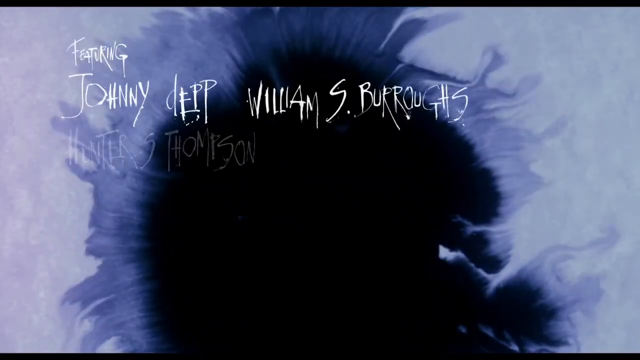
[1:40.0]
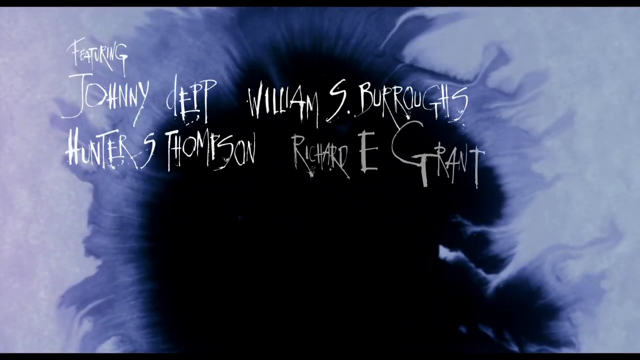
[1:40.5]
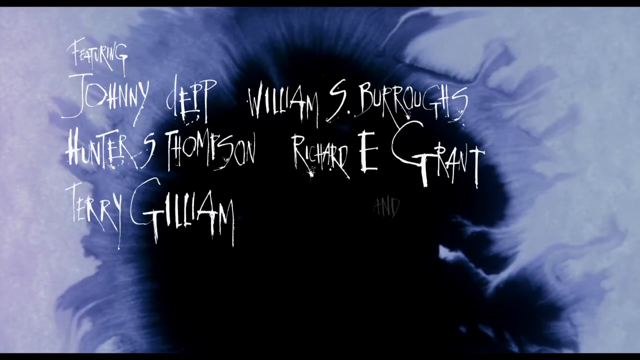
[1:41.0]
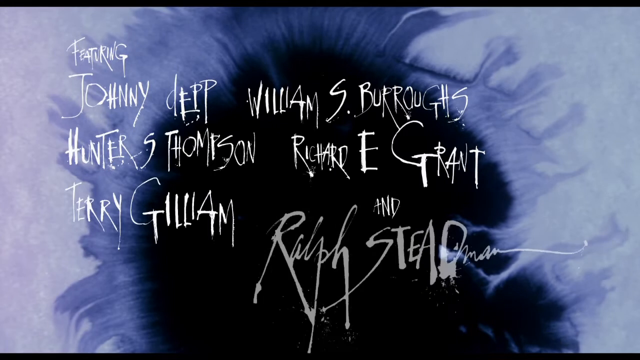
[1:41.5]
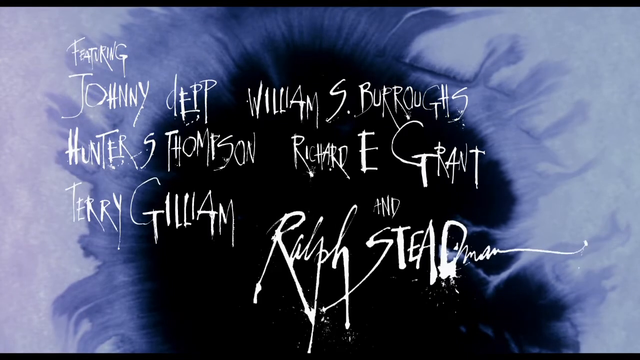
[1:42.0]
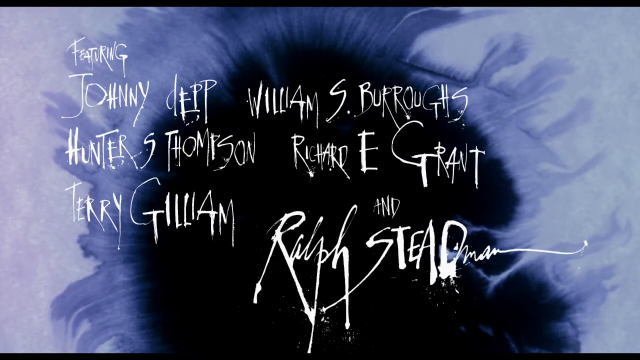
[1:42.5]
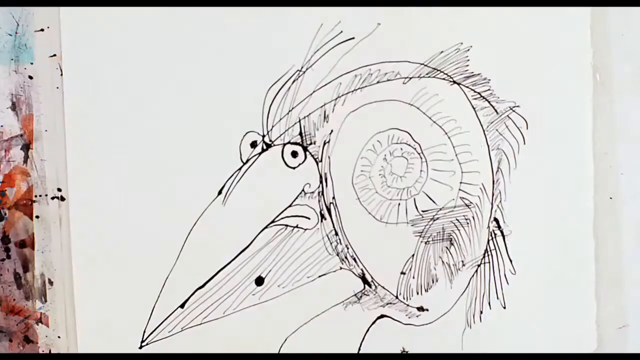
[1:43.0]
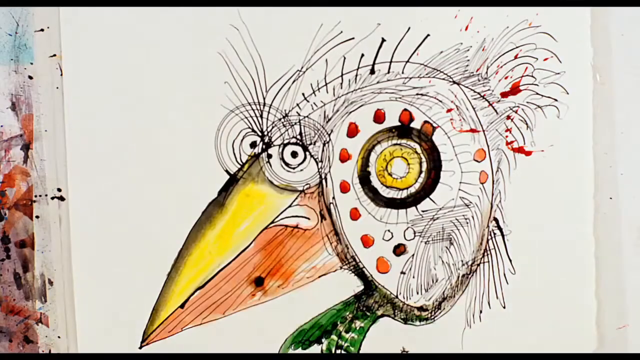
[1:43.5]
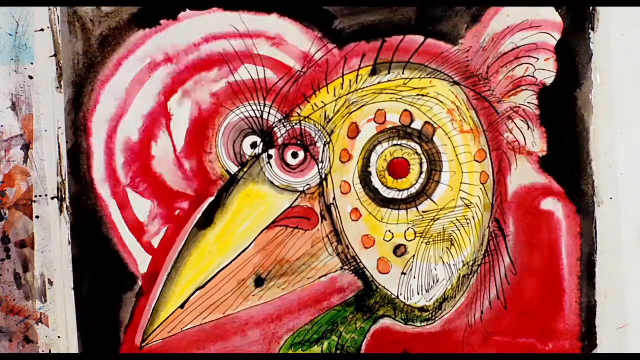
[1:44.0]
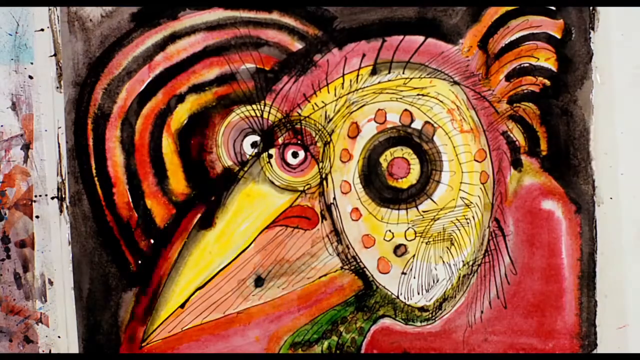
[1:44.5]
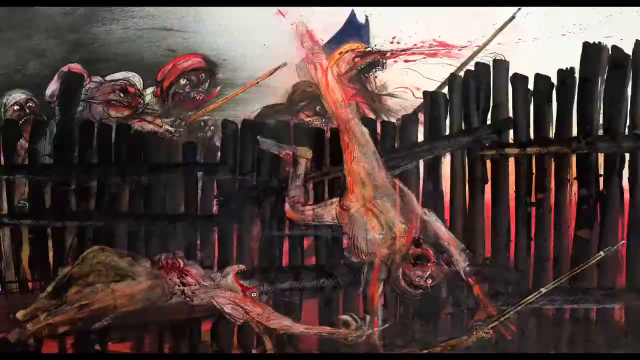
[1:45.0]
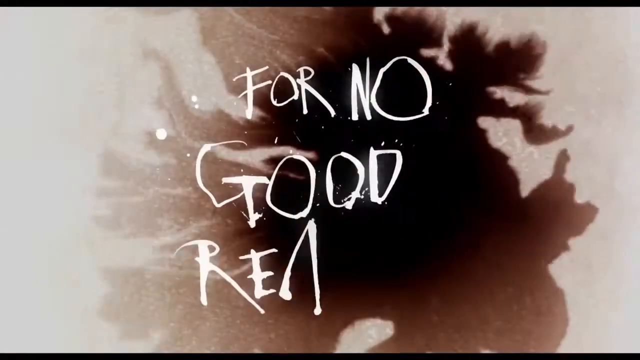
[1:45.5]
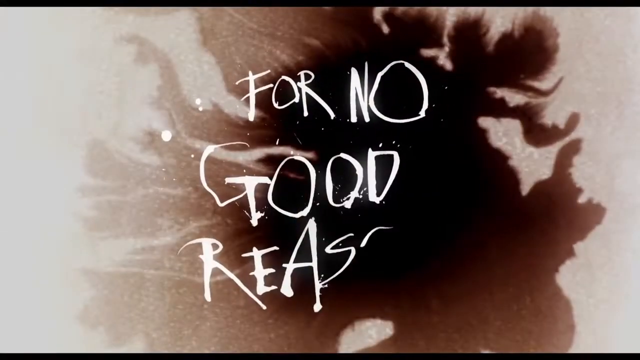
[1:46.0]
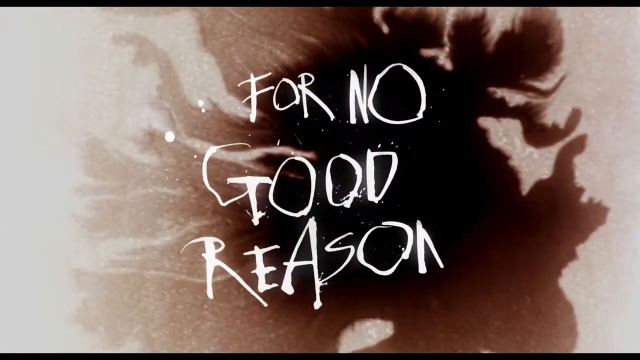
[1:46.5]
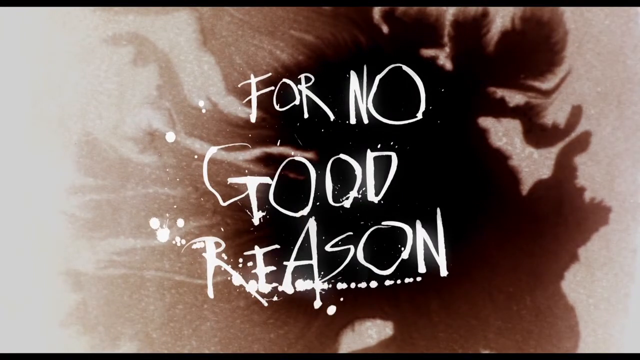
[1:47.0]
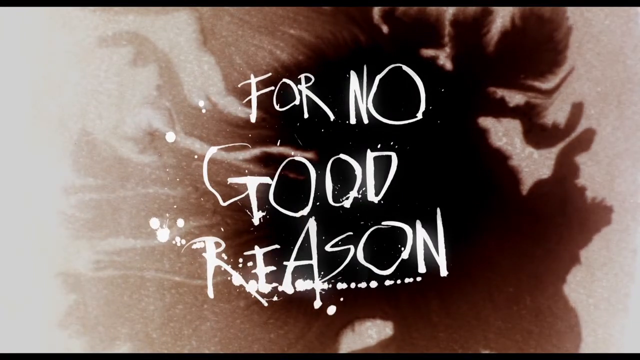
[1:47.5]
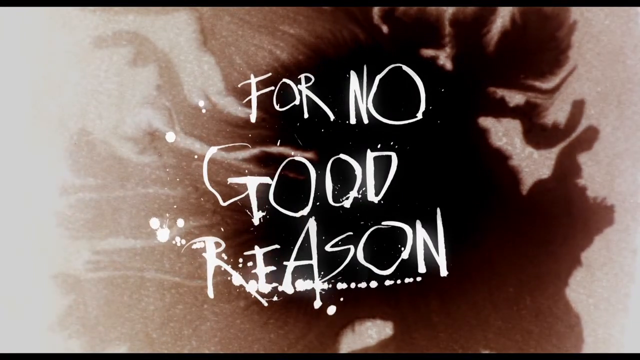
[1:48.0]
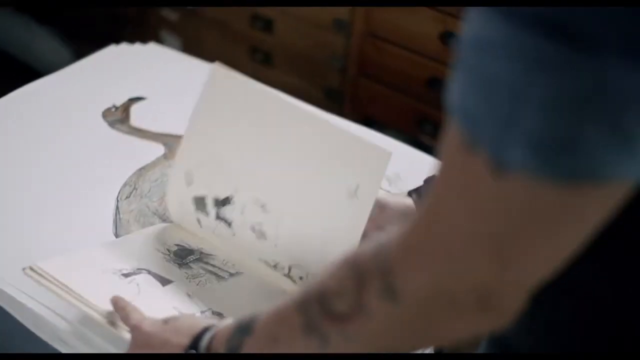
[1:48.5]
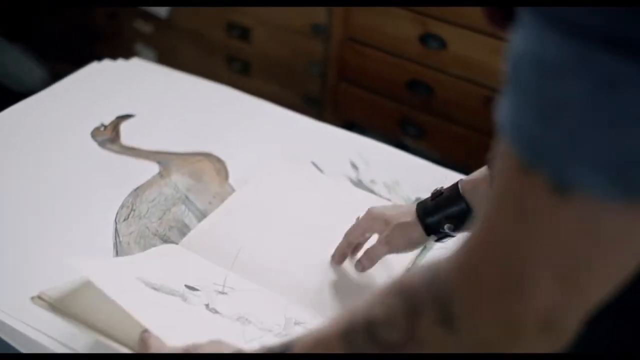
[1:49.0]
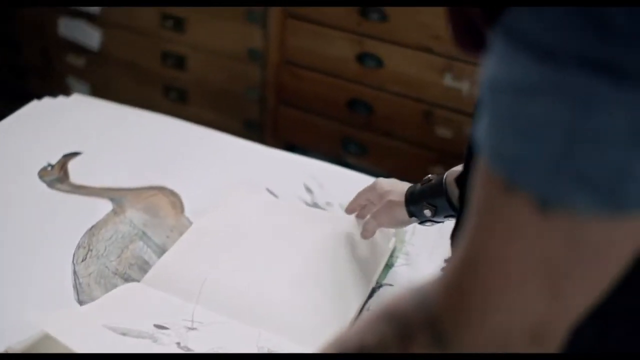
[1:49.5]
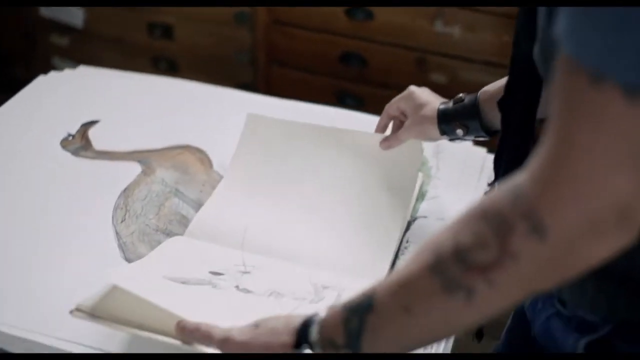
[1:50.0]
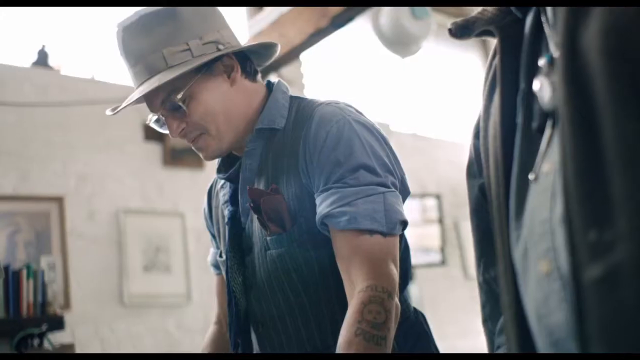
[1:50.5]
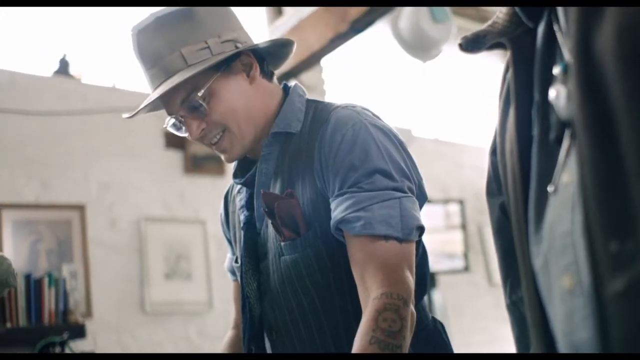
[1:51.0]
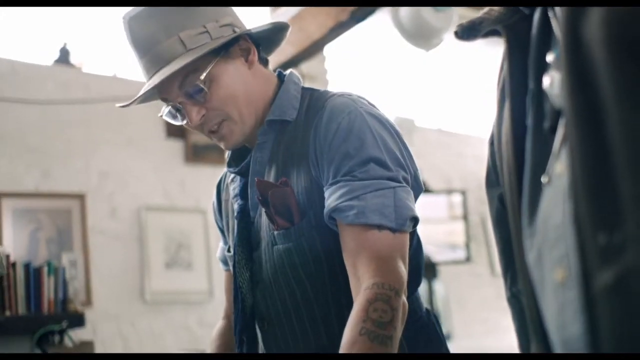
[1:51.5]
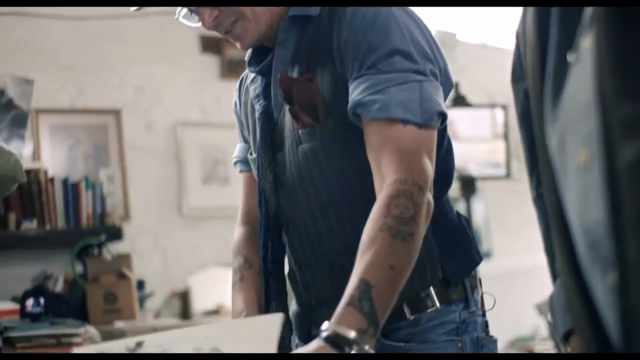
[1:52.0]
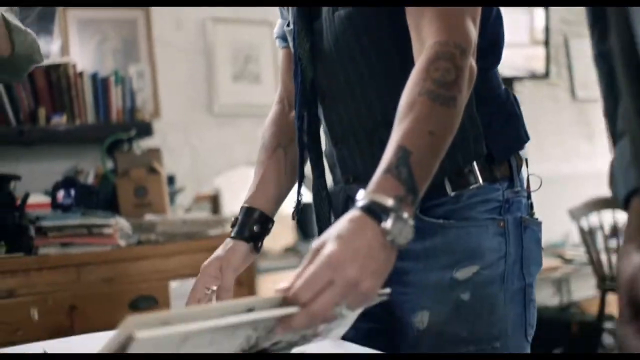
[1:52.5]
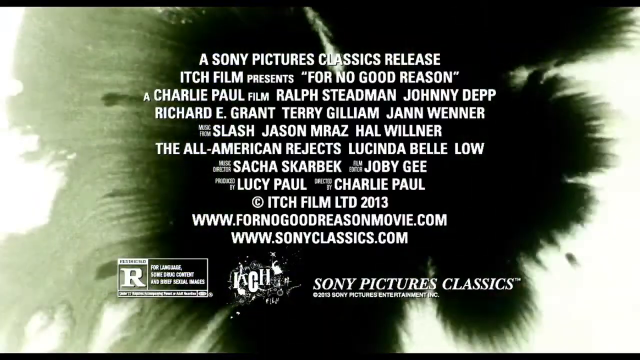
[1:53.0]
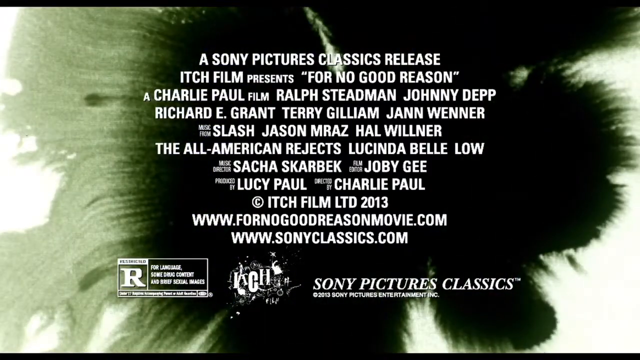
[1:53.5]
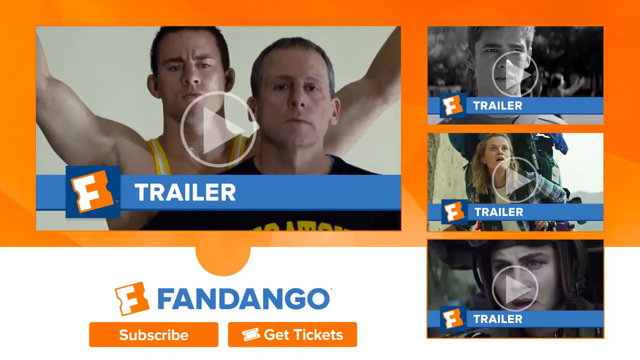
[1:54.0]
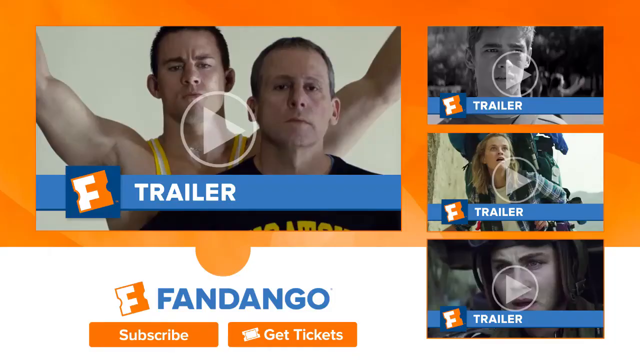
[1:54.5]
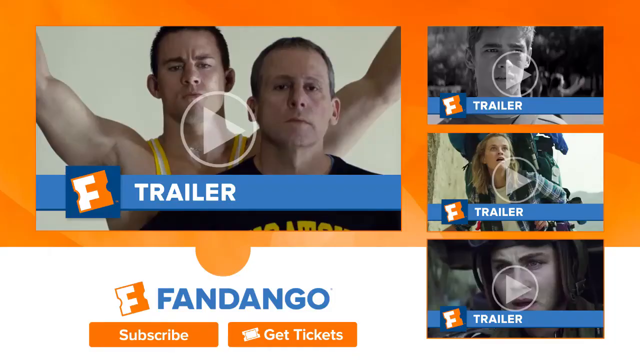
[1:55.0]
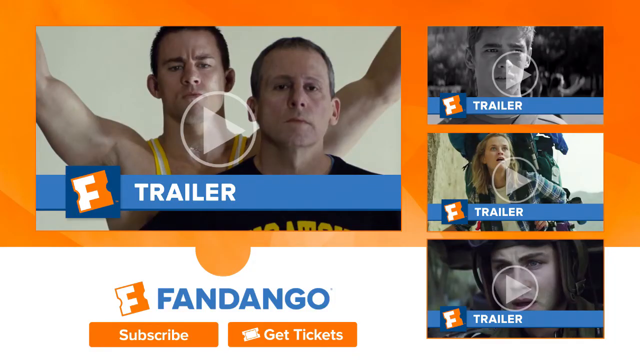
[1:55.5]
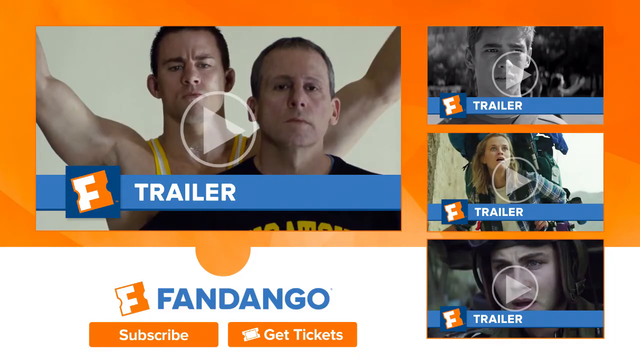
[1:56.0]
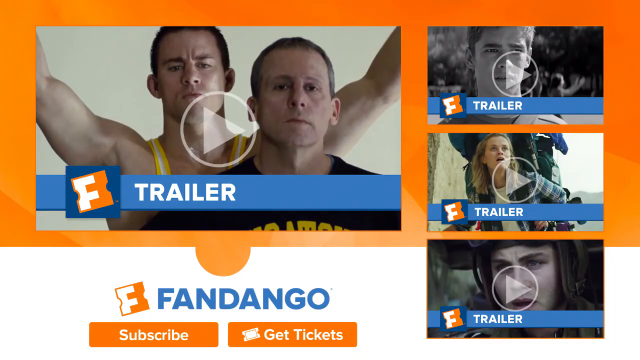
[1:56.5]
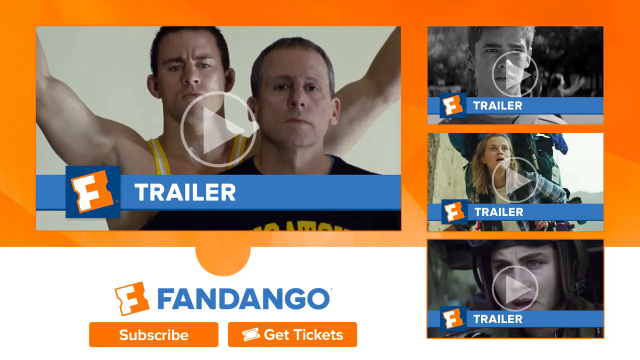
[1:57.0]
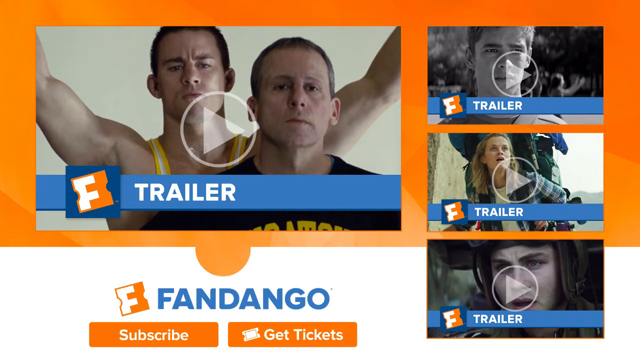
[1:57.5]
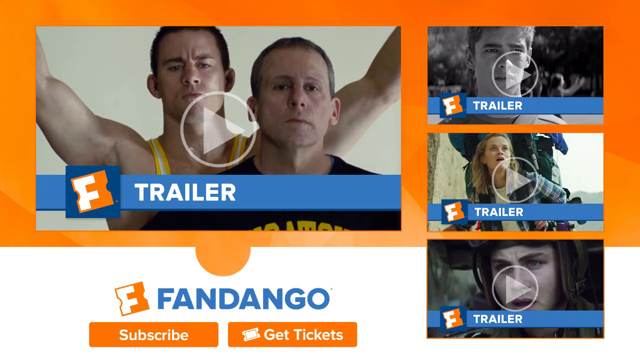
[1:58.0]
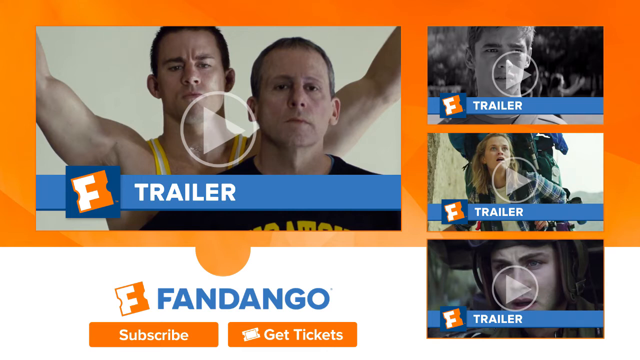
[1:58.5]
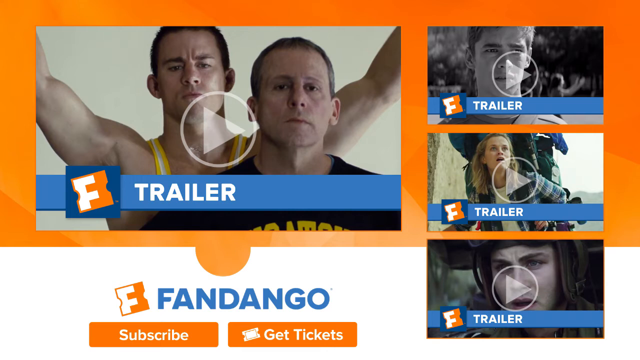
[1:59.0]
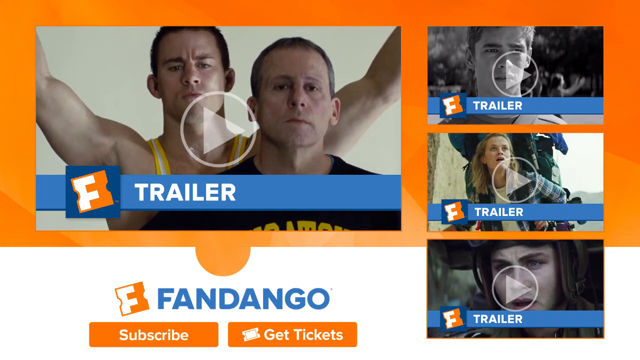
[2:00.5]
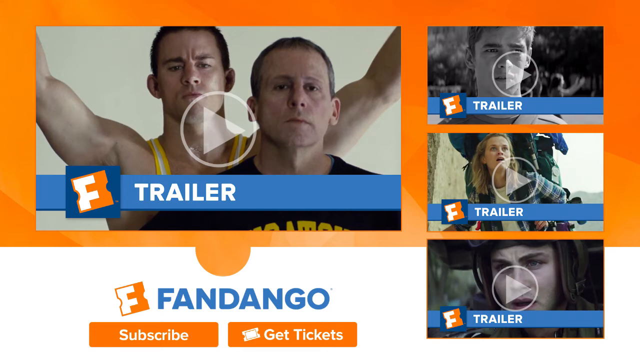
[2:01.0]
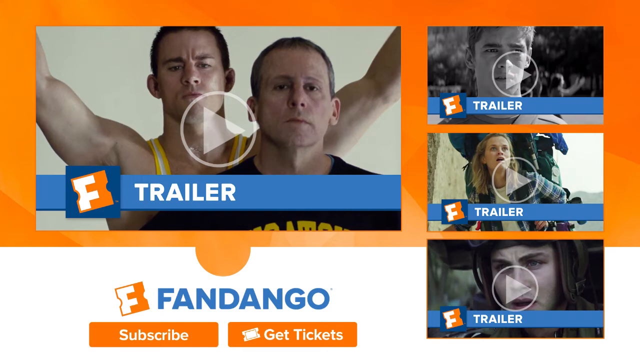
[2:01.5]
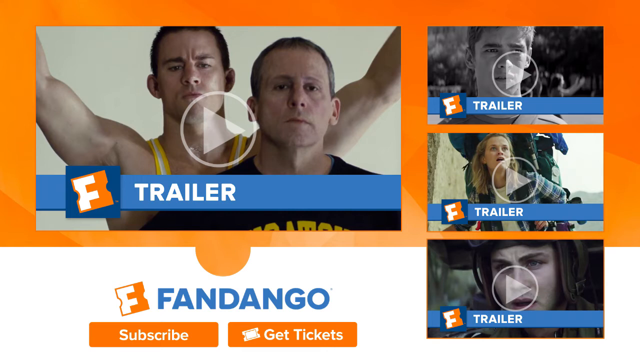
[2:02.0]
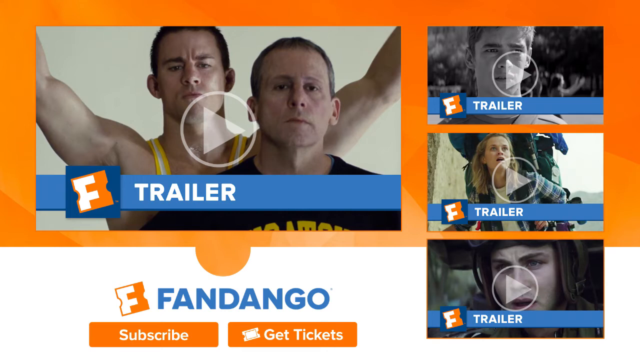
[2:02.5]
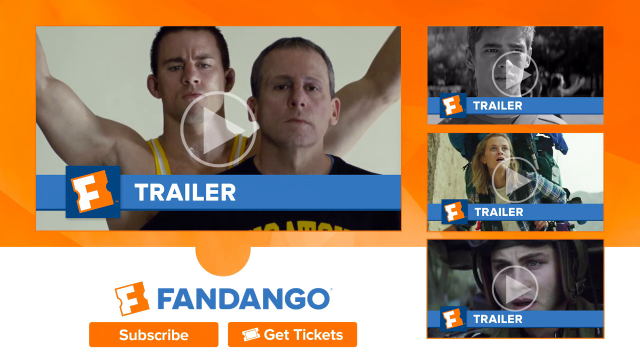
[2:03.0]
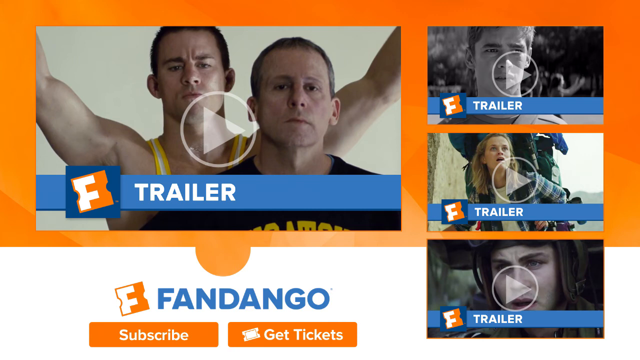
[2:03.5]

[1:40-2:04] Credits name Johnny Depp, Hunter S. Thomson, Richard E. Grant and Ralph Steadman. The title is For No Good Reason. Text reads "a Sony Pictures Classics release" and "a Charlie Paul film," followed by more names including Ralph Steadman, Johnny Depp, Richard E. Grant, Lucy Paul and Charlie Paul, and the year 2013. The websites "for no good reason.com" and "sonyclassics.com" are shown, along with Sony Pictures Classics.